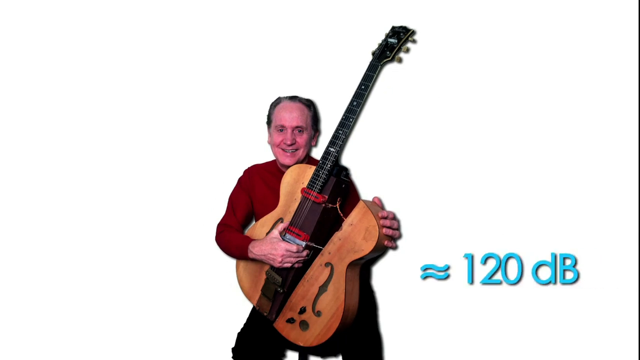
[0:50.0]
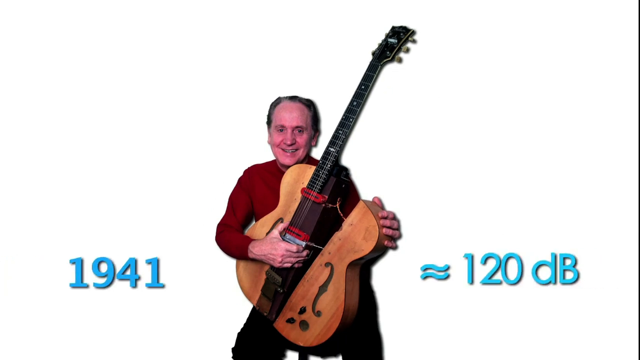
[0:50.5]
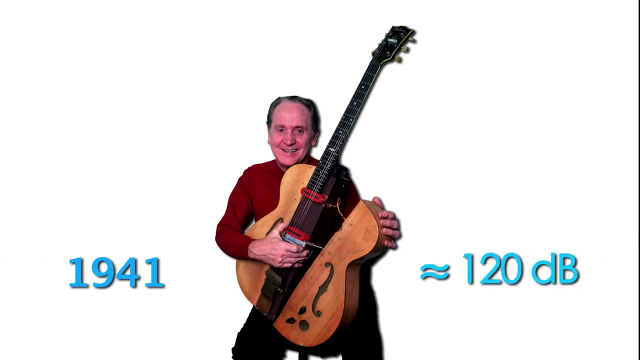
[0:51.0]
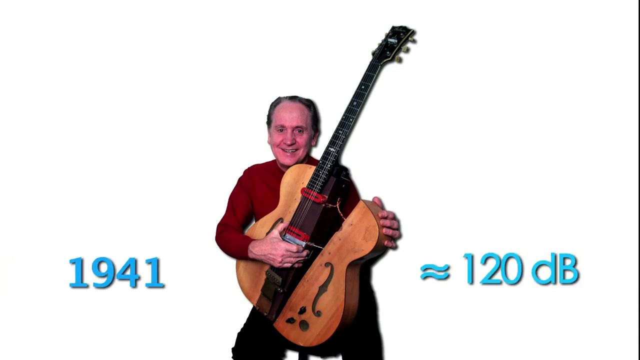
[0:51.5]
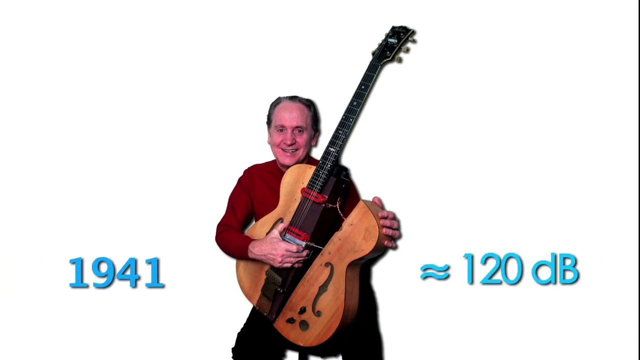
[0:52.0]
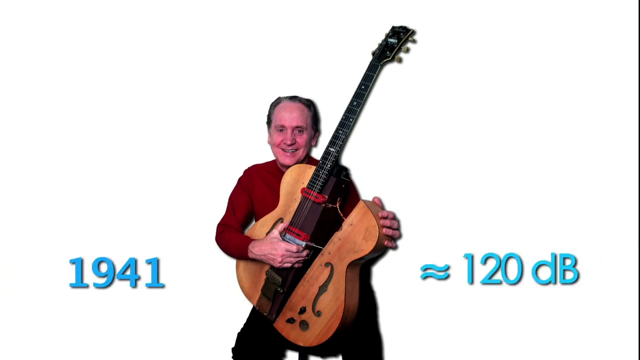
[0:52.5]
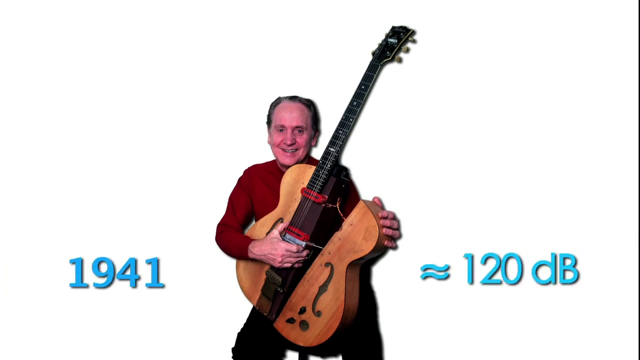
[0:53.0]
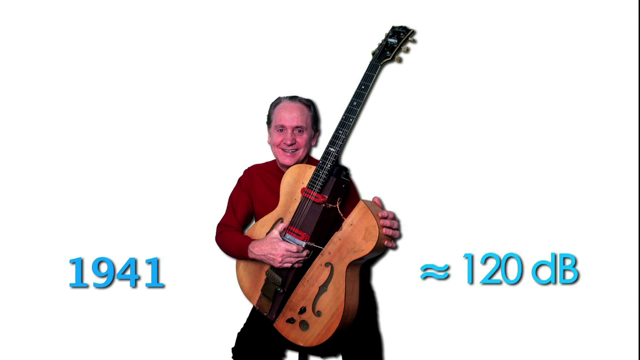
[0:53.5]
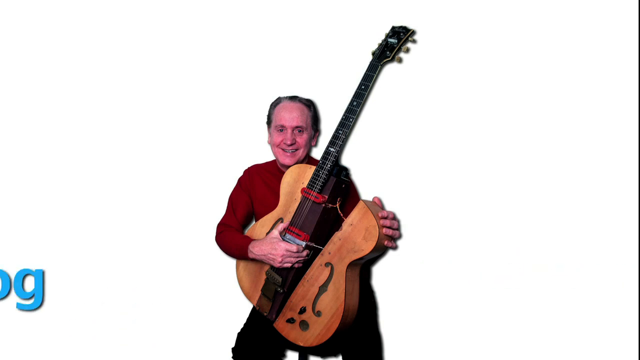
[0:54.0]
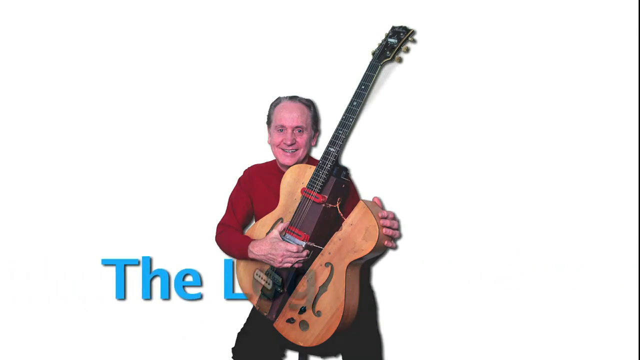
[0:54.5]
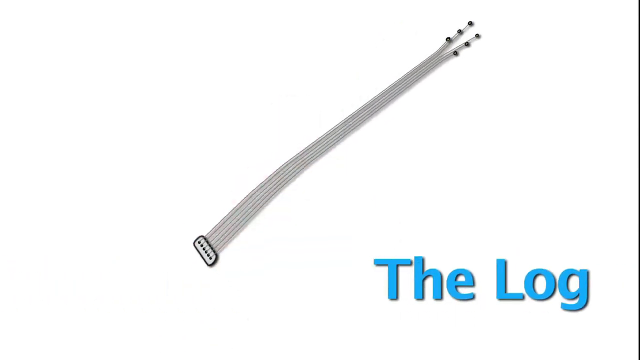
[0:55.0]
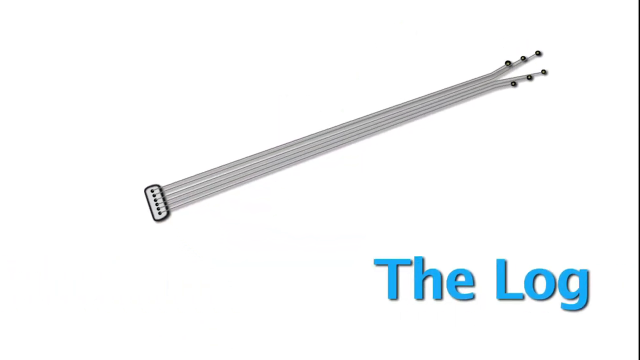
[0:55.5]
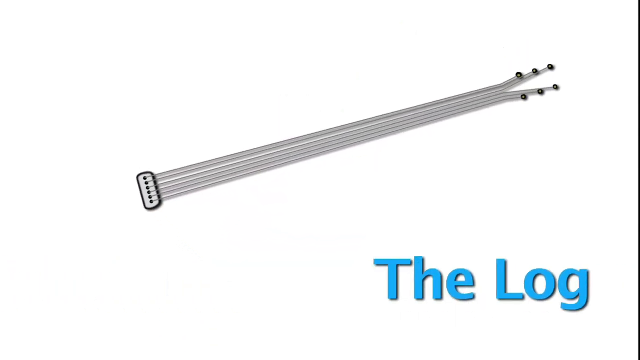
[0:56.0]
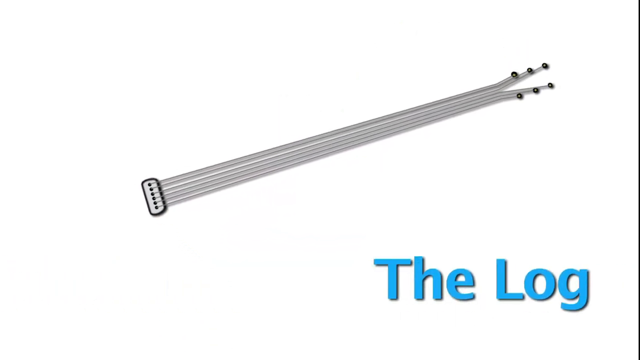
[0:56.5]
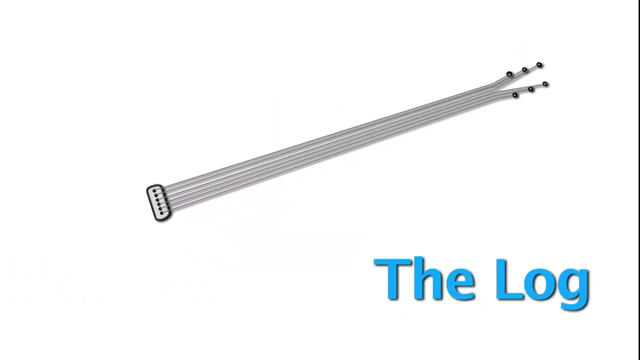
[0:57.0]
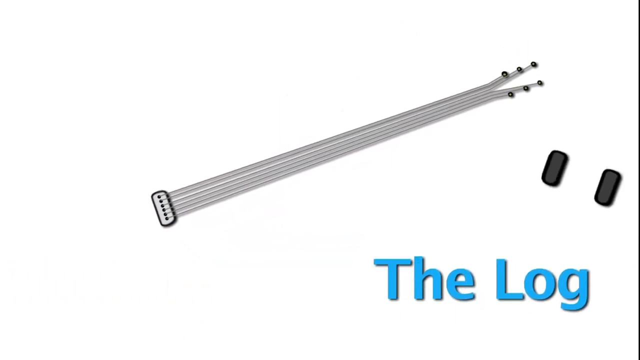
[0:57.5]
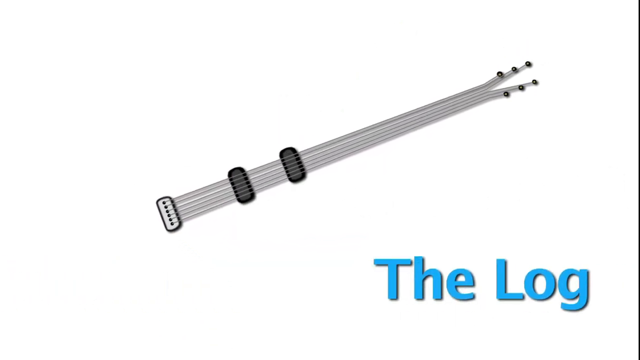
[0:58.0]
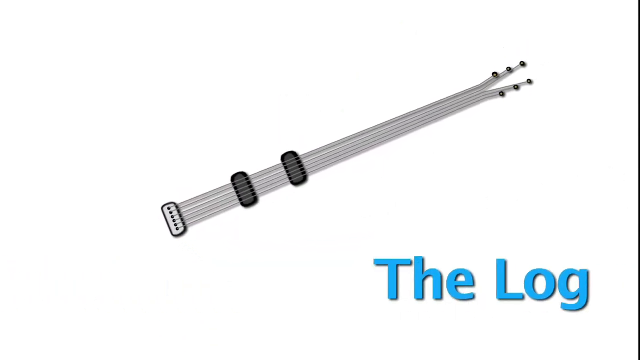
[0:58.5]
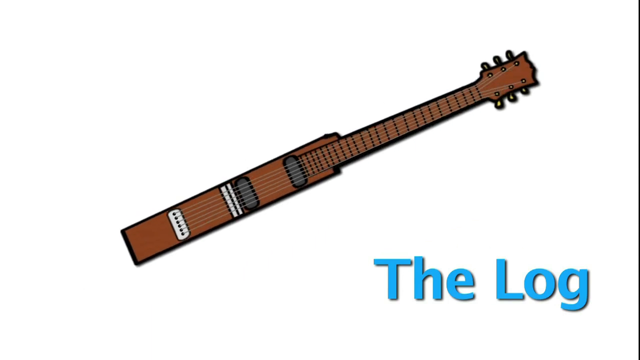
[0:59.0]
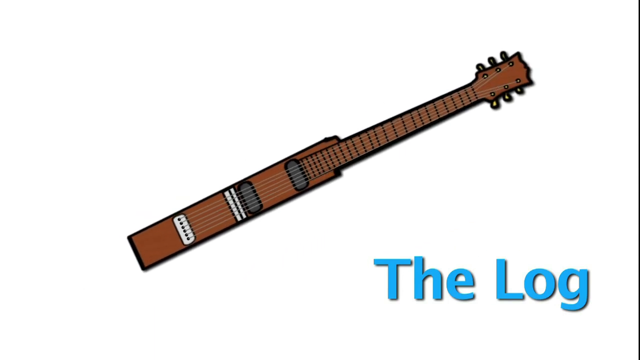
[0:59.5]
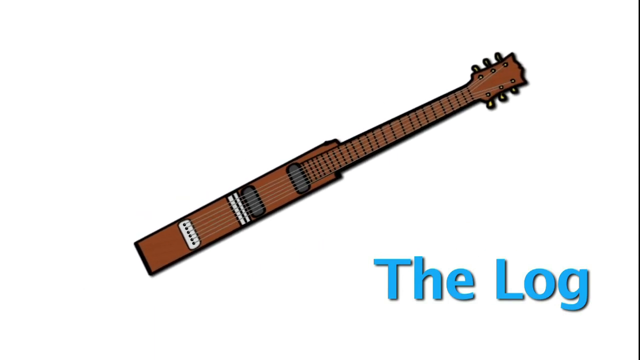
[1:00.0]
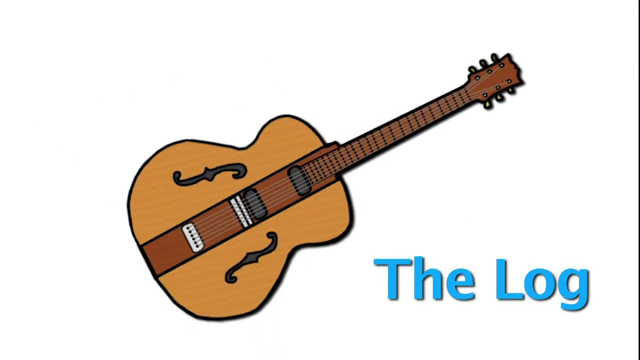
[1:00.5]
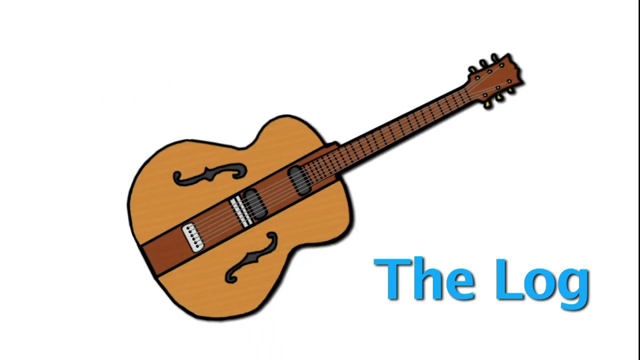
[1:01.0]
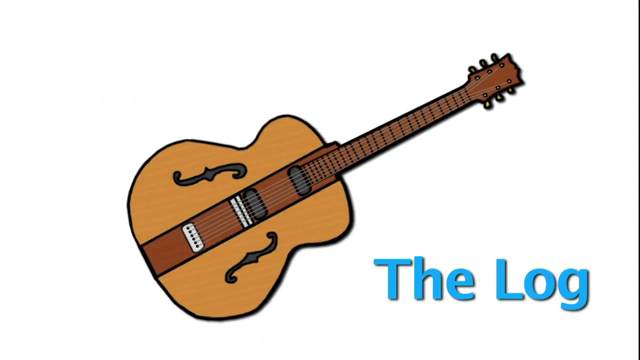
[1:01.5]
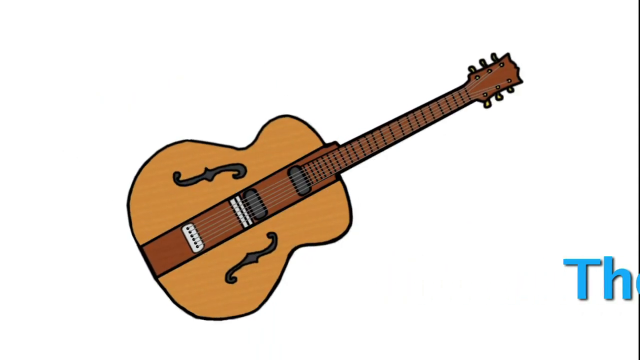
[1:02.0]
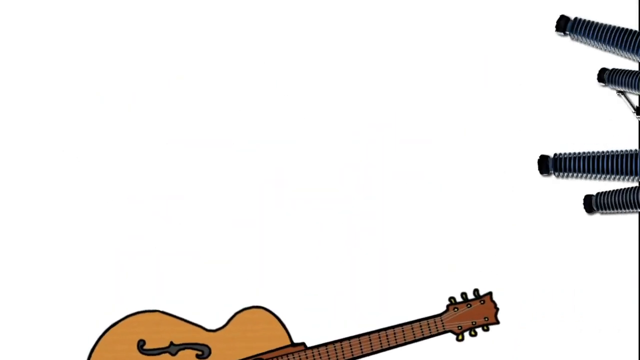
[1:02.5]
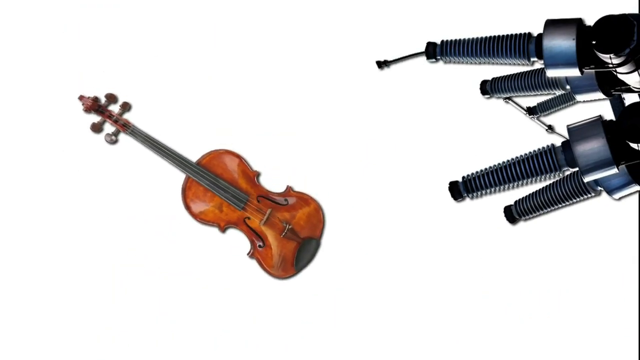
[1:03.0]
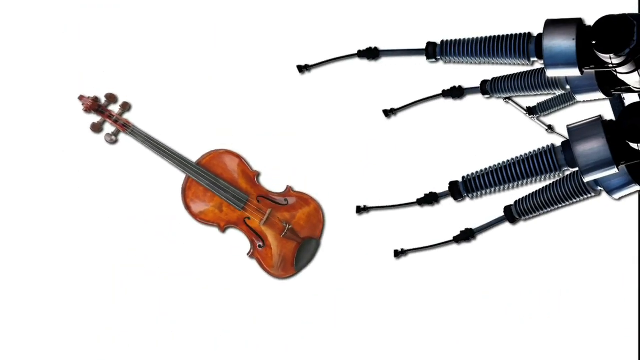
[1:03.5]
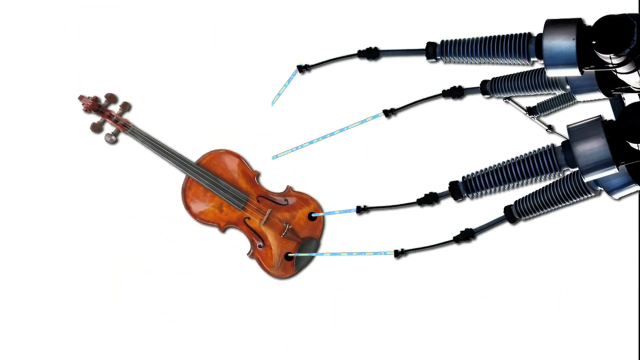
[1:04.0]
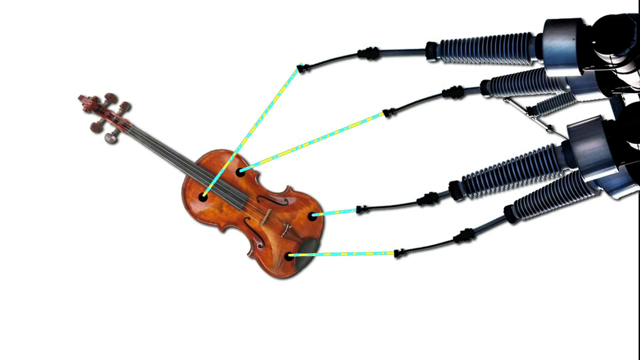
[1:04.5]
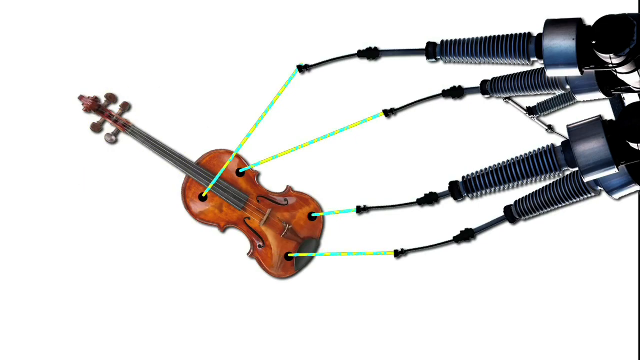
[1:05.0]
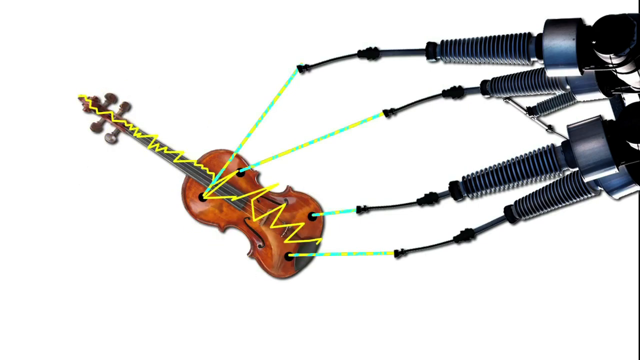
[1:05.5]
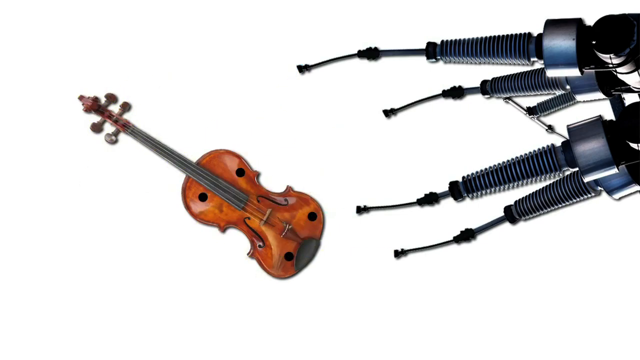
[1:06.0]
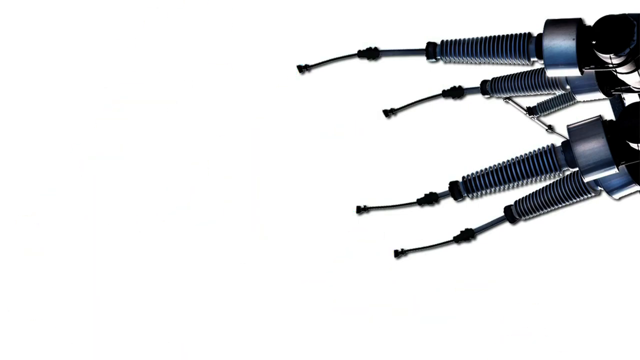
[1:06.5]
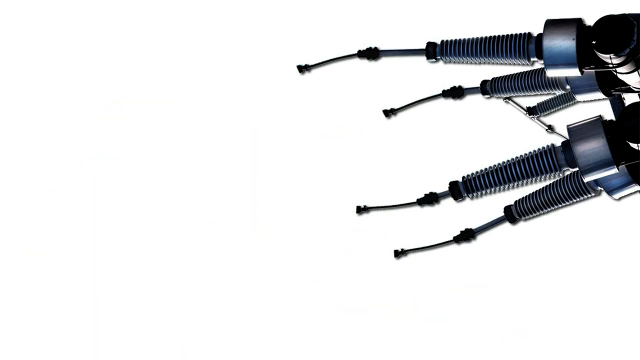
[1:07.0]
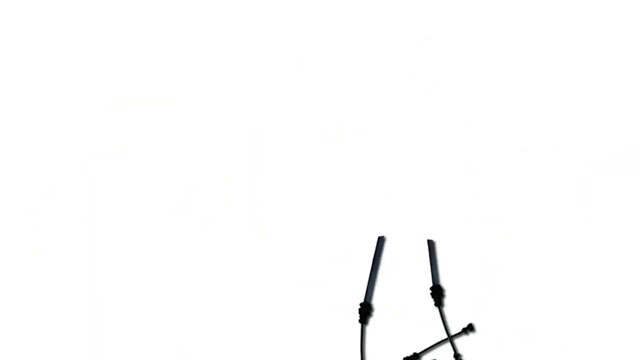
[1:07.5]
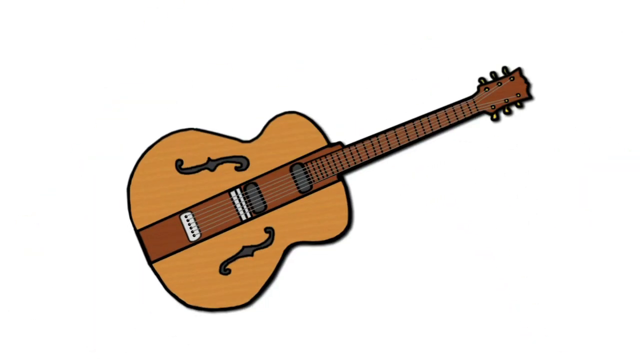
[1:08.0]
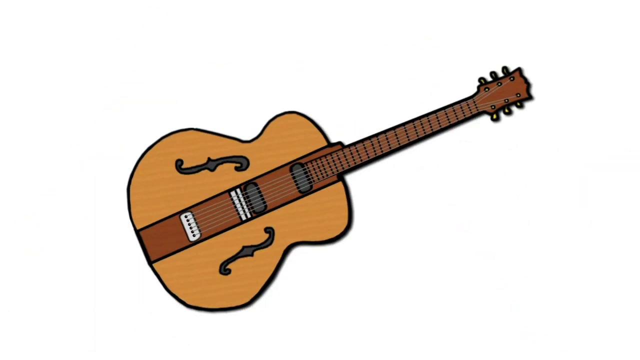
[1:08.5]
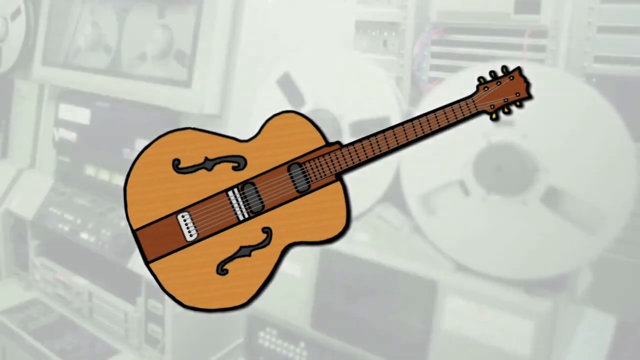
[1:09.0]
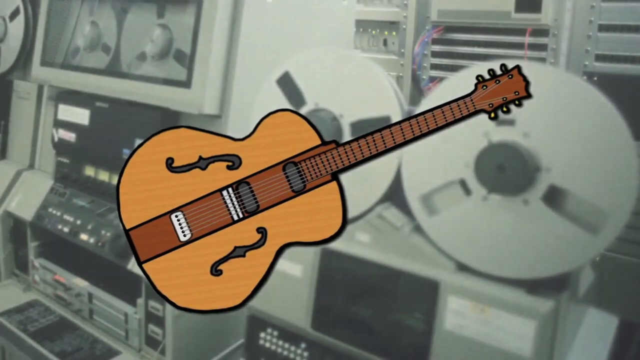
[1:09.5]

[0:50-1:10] A man in the middle of the screen holds a guitar that has two red bands near the bottom; the left side of the guitar seems to be detached from the rest of it. Cyan text on the screen says "120 decibels", and the text "1941", in the same cyan color, slides in from the left to the bottom left of the screen. The two texts then slide off the screen: the bottom right text to the right, and the bottom left text towards the bottom. The log appears from the bottom left of the screen and moves all the way to the bottom right. The strings of a guitar appear in the middle of a completely white background while parts of the guitar slide in from different sides of the screen to complete a picture of a guitar. From the right side, electrical cords appear and shock a violin that has slid in from the left side of the screen. Then a guitar slides up from the bottom of the screen.